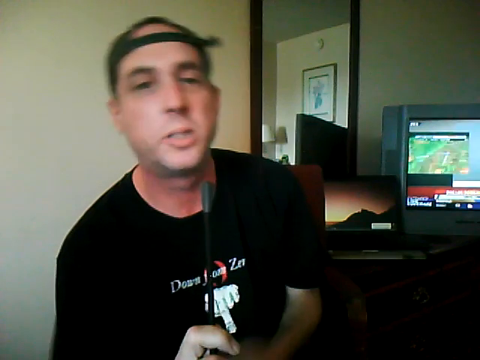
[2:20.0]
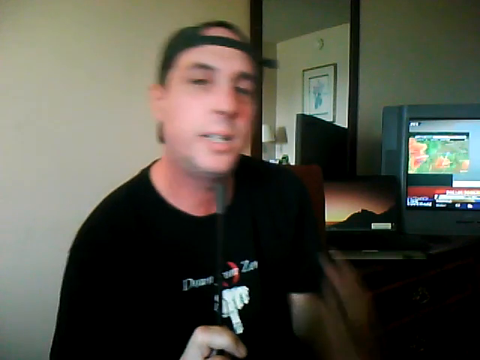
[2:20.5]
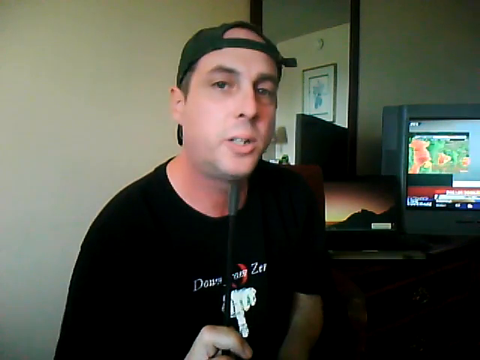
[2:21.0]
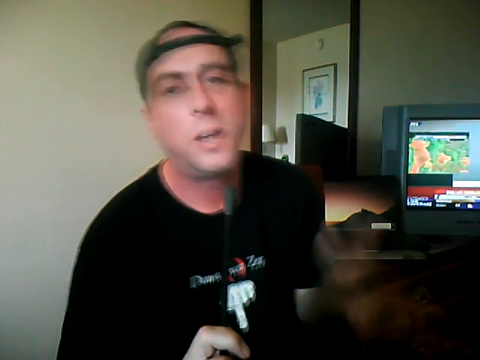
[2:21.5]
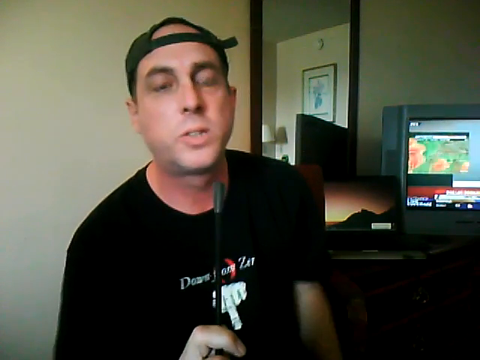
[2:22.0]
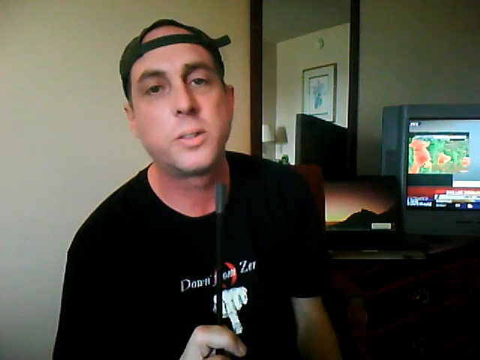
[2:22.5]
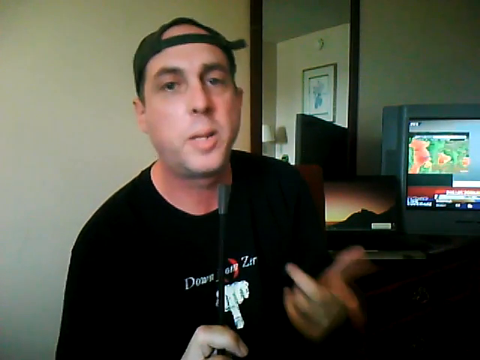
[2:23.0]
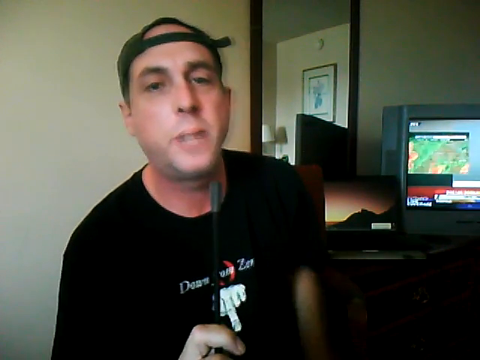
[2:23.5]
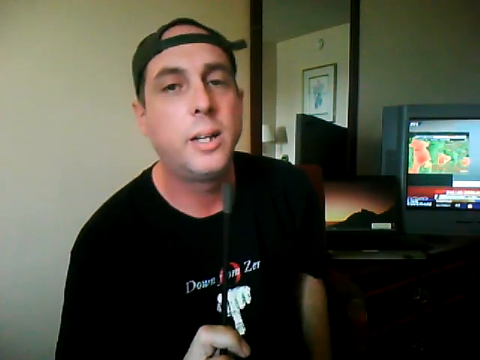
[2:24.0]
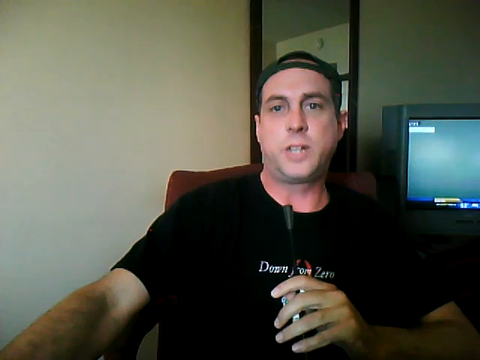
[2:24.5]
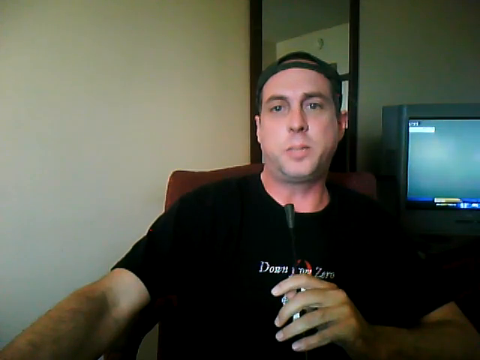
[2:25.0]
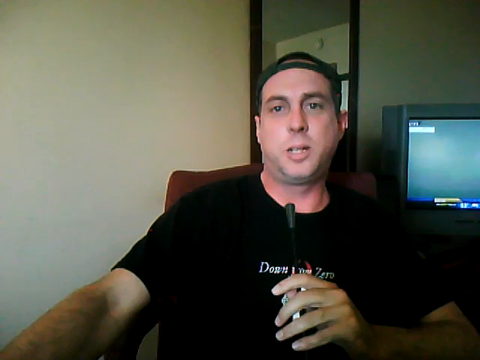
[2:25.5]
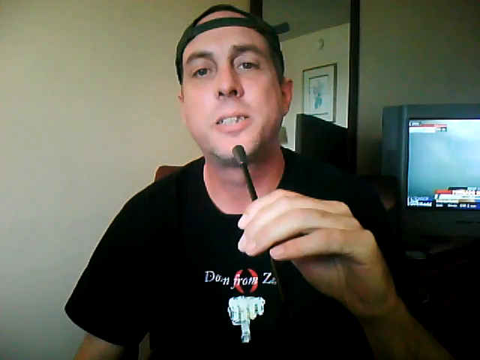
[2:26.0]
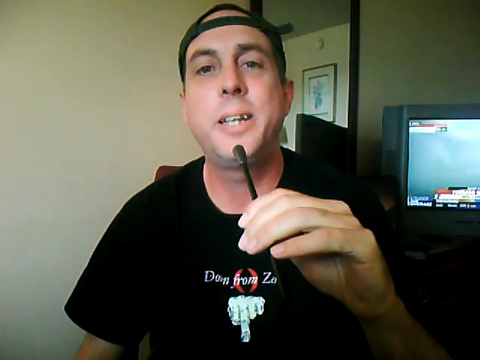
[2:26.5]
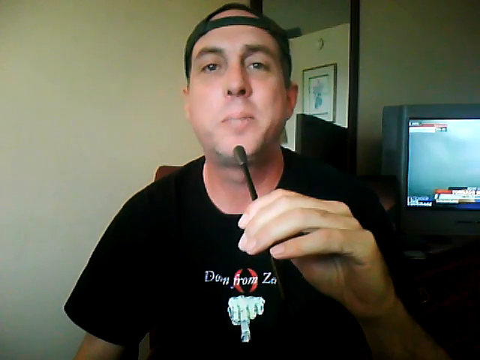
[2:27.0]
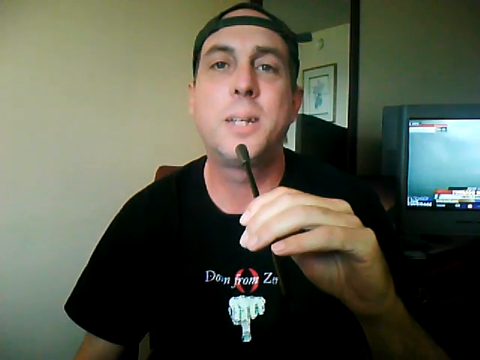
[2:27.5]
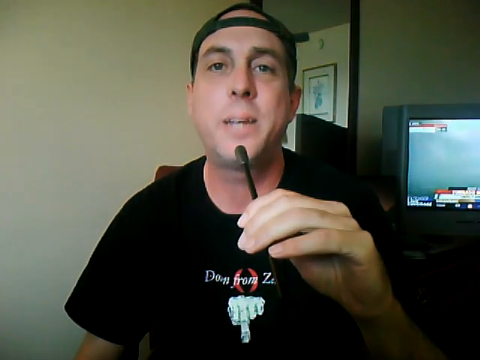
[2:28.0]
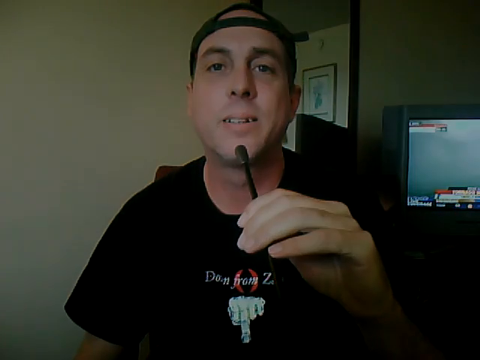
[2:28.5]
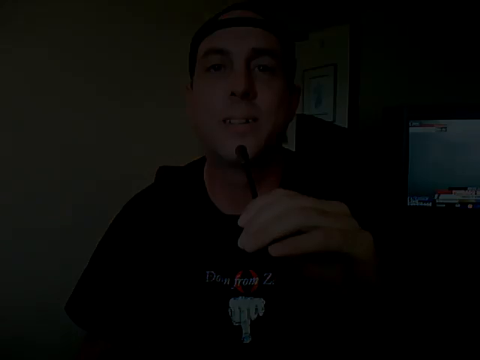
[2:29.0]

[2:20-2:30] The man holds the microphone in his right hand and uses his left hand to gesture and make pointing movements. He then holds the microphone in his left hand, and his right arm appears to be extended, as if he is moving something on a table in front of him that is not visible. He appears to lean back in his chair, as more of the back of the chair is visible behind him. He continues speaking, but for a moment he is not looking directly at the camera and appears to be looking at something off screen. He then looks directly at the camera as he finishes speaking.